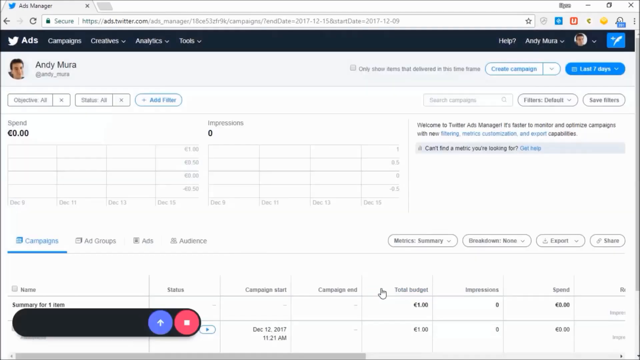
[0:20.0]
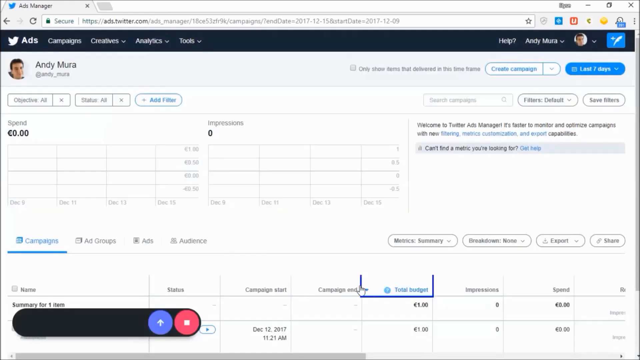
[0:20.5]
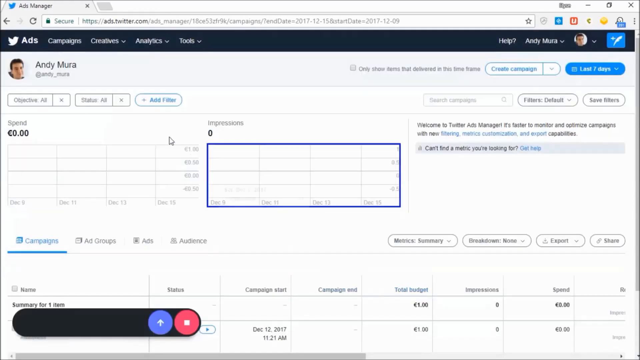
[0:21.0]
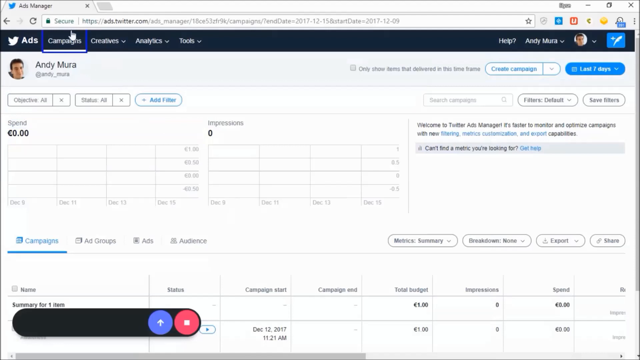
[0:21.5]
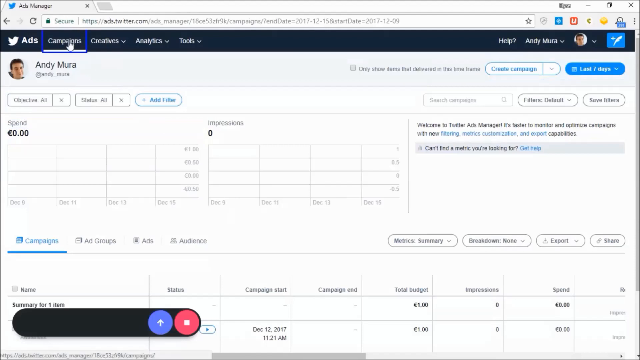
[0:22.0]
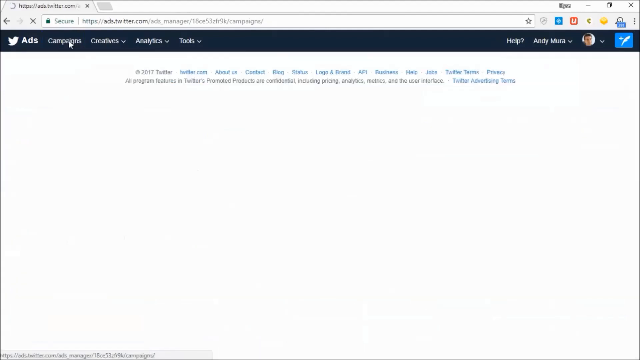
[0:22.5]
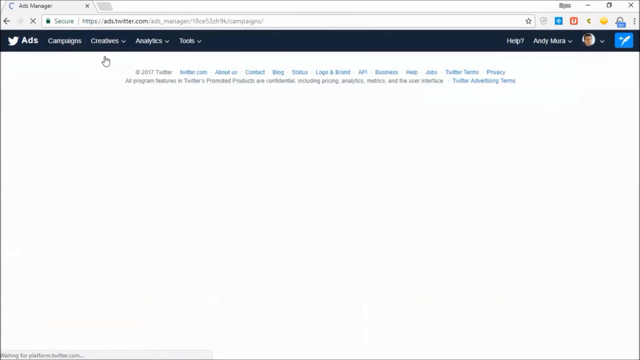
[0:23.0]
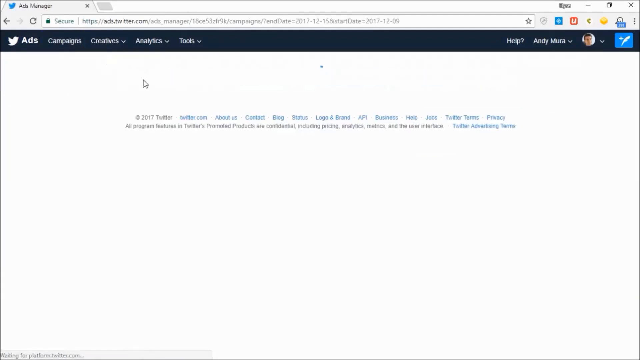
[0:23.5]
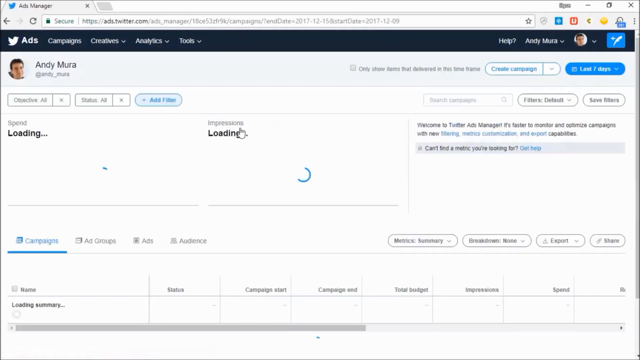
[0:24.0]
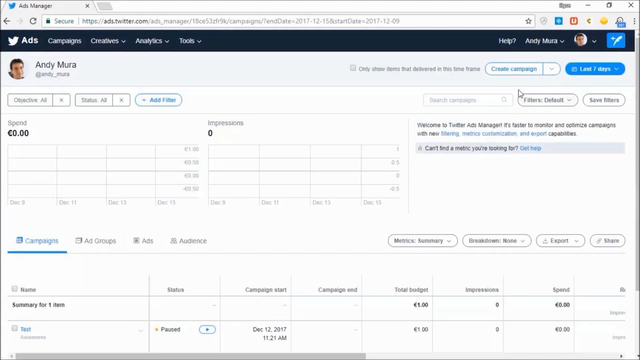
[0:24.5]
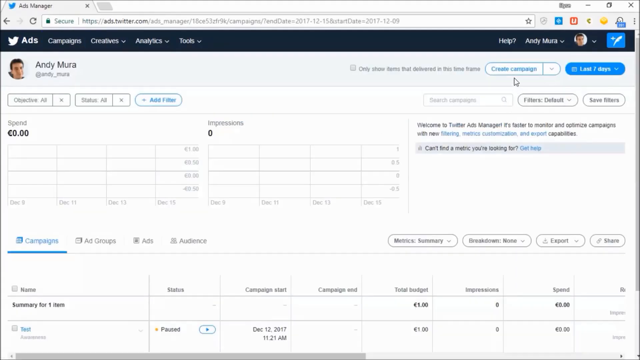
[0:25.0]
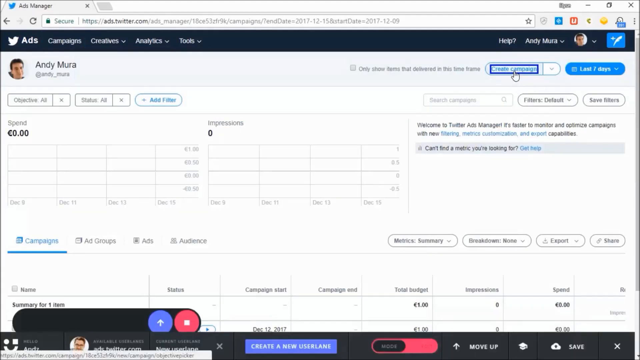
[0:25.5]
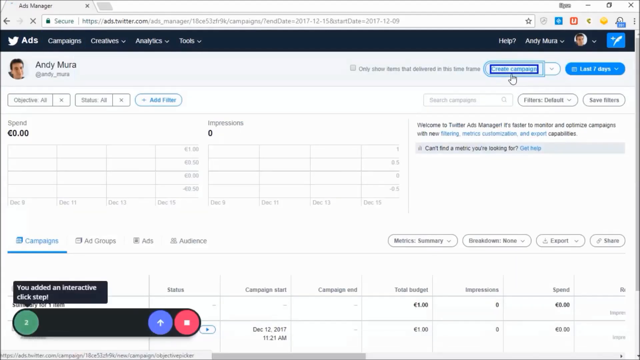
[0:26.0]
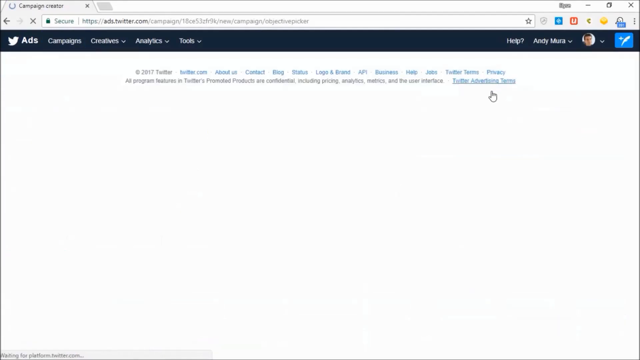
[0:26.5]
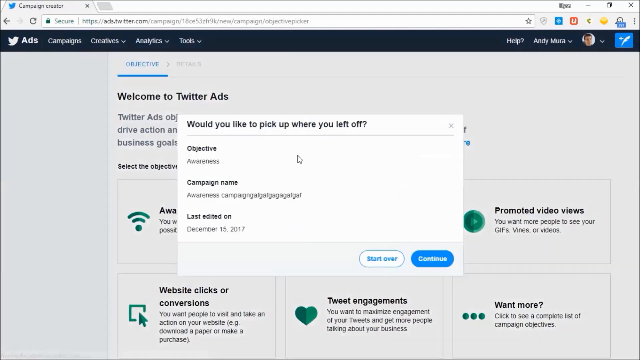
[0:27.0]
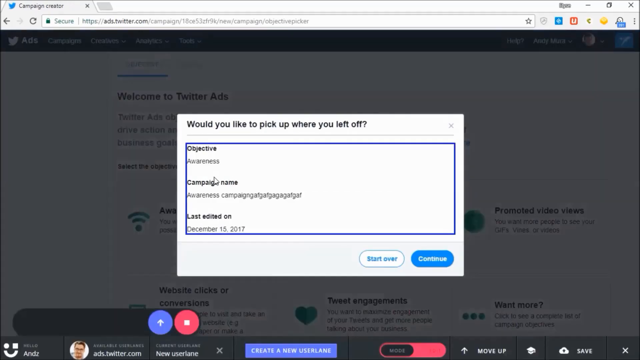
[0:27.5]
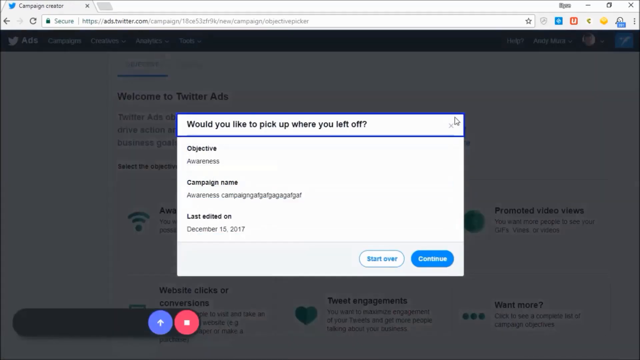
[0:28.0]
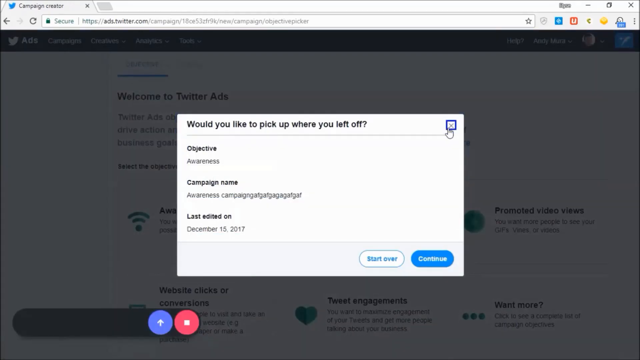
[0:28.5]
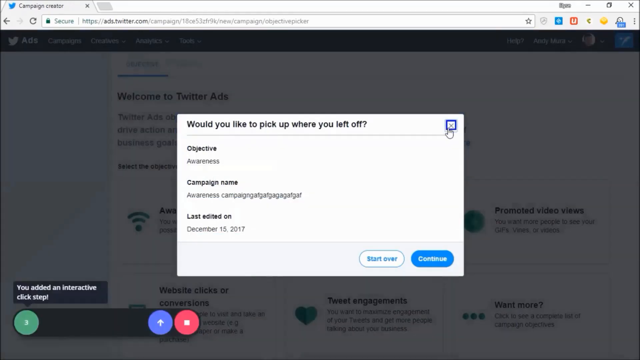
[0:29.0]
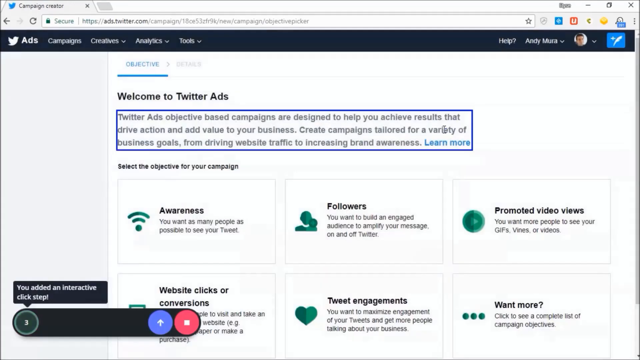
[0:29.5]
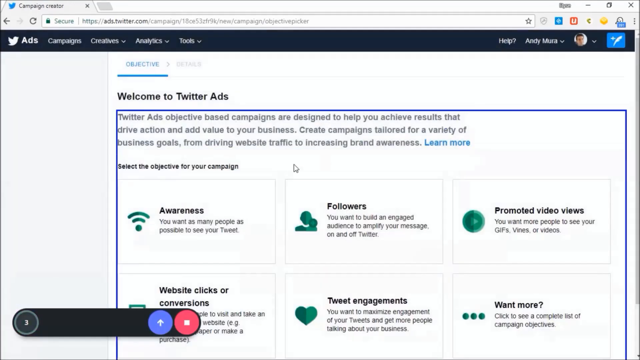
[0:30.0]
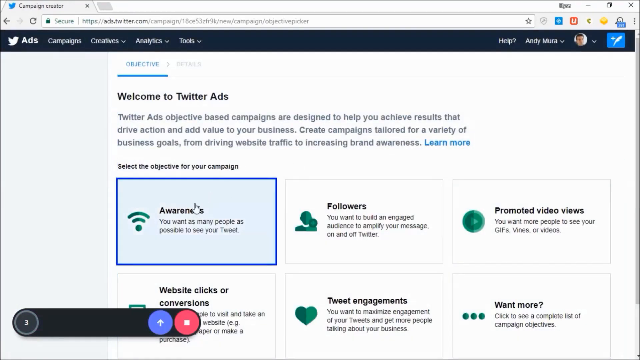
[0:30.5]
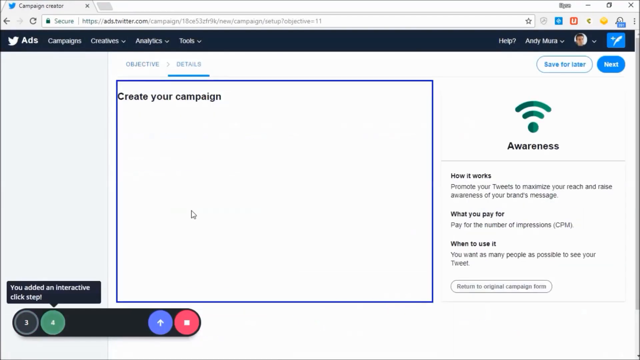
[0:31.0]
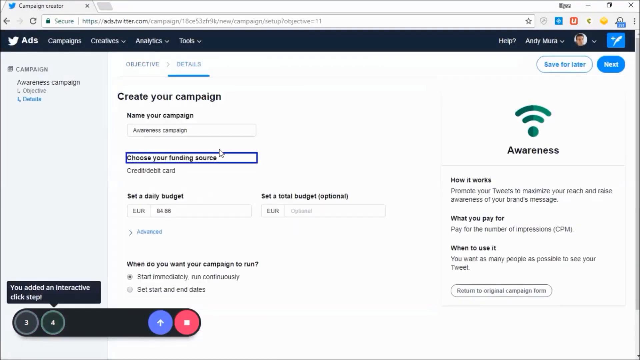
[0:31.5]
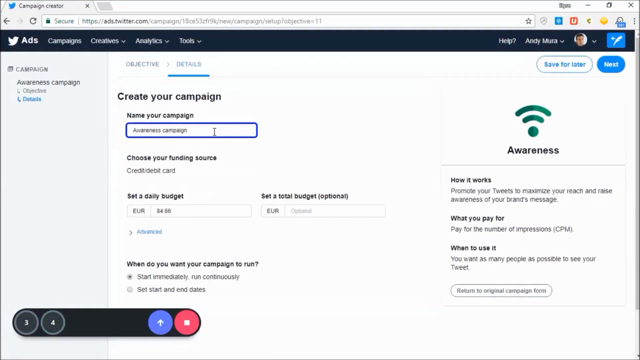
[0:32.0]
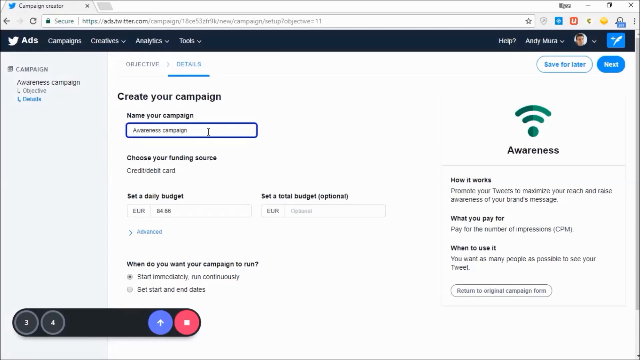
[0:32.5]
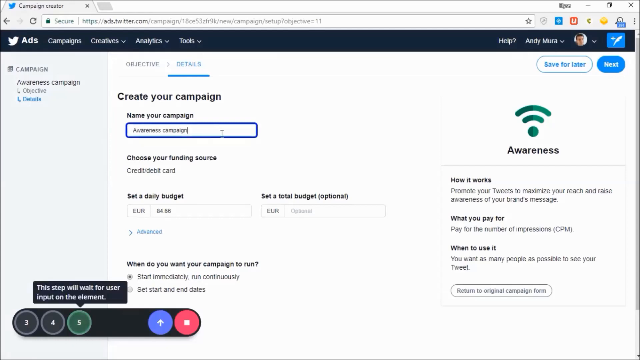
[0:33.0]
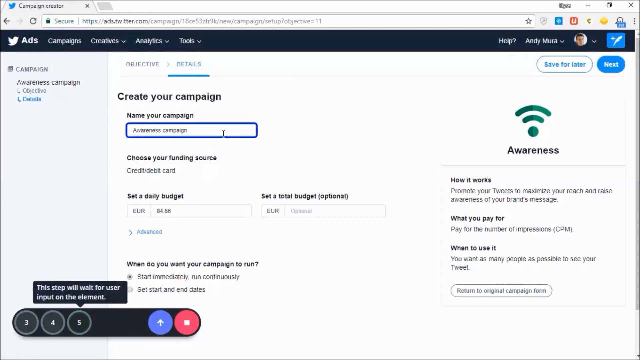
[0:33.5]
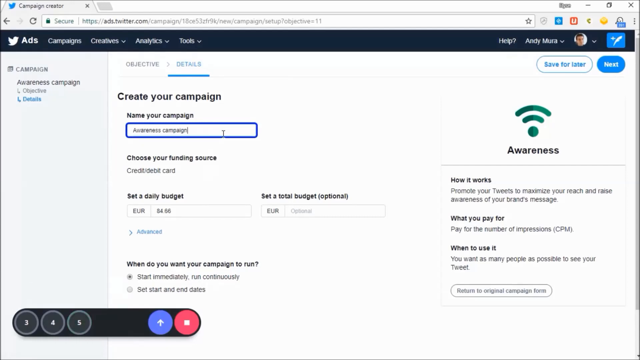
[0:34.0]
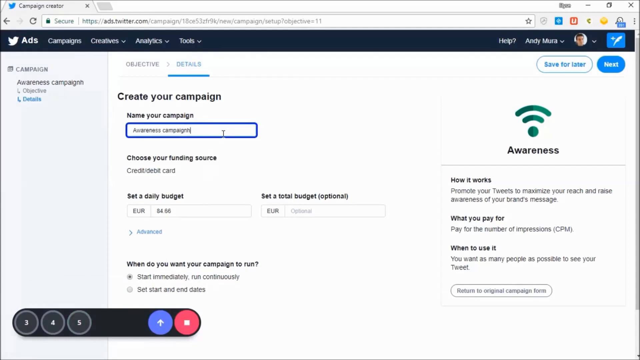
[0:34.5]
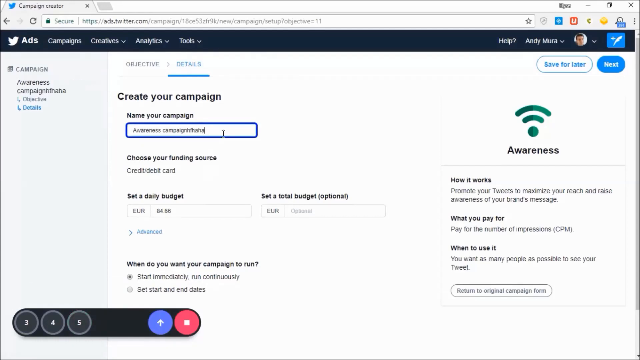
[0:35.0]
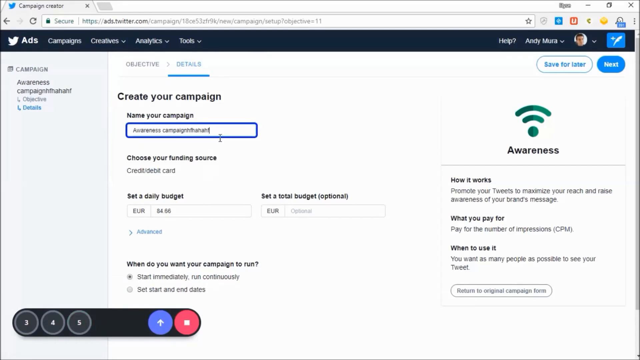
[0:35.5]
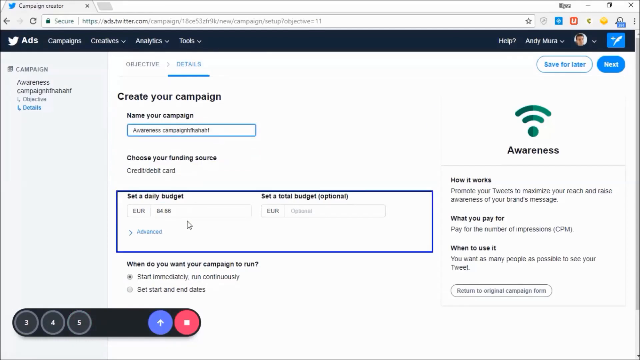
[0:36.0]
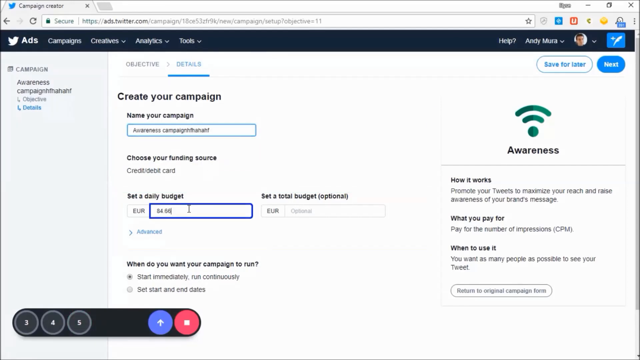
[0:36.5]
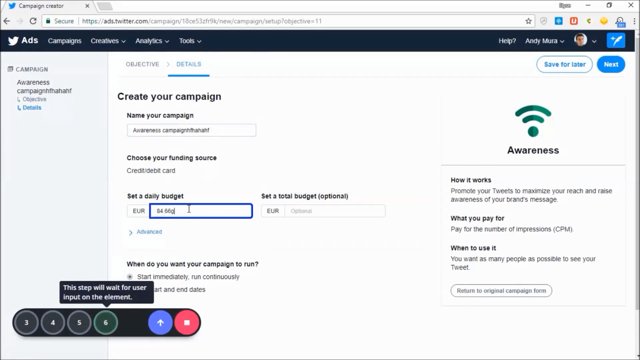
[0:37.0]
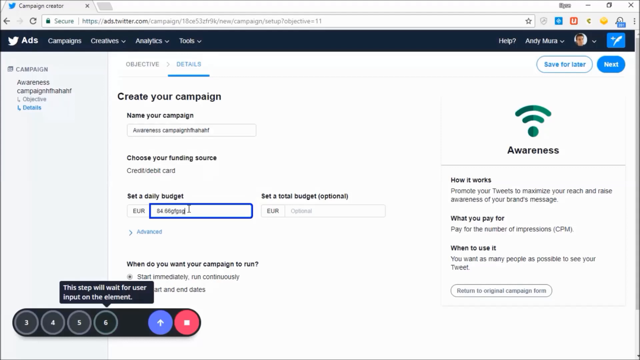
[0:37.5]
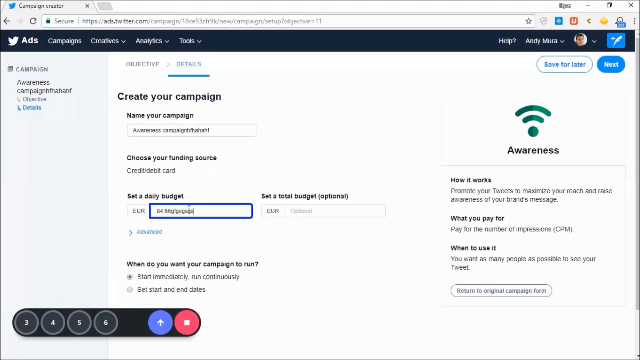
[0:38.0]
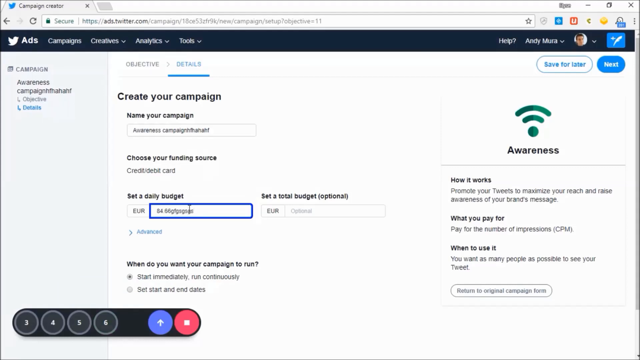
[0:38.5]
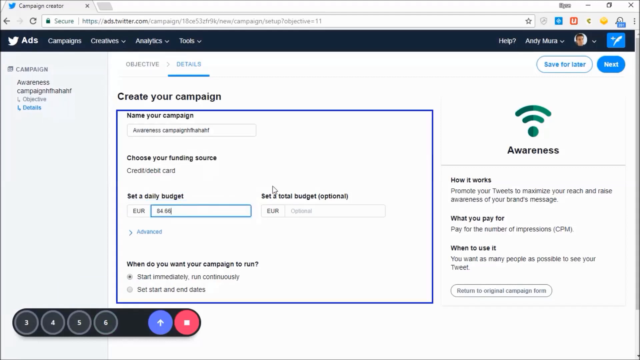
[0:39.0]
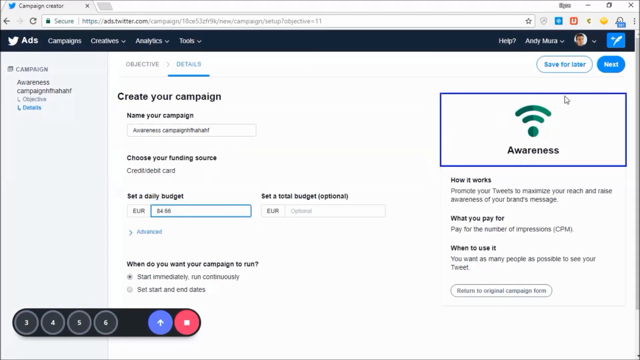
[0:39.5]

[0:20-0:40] A page for Andy Mora is shown, apparently during a walkthrough. Down below there is a recording-type option that appears to be recording: a red circle at the bottom left is in a stop state, signifying it can be stopped, and it is probably recording at the moment. Next to it is an arrow in a blue circle. The page is open to the campaigns section, with some campaign data below. "Create a campaign" is clicked, bringing up another box that says "would you like to pick up where you left off?" with information displayed. It says "objective", and the user seems focused on the campaign name. The user then selects a different area, which brings up the campaign box for adding more content, and they are also in the set daily budget area.